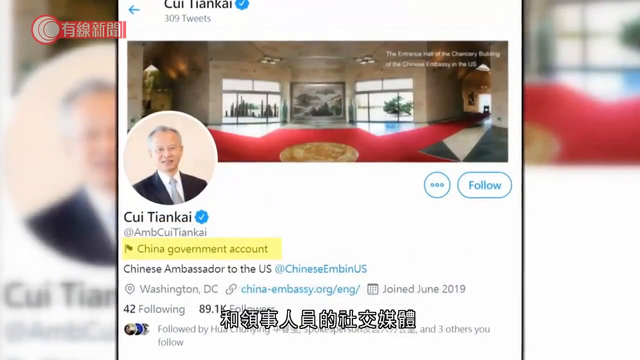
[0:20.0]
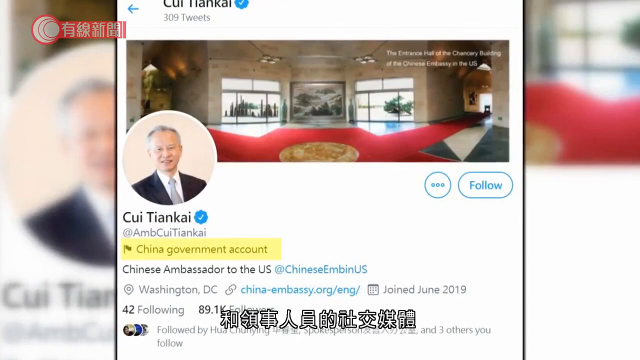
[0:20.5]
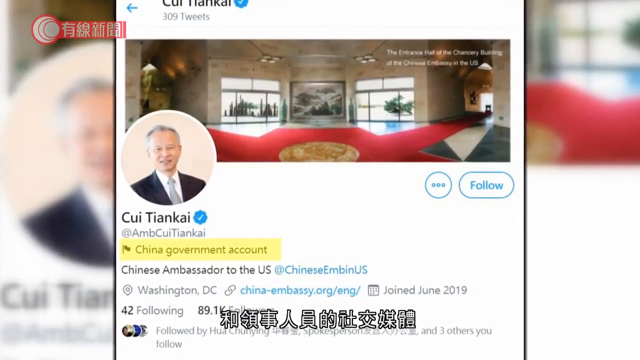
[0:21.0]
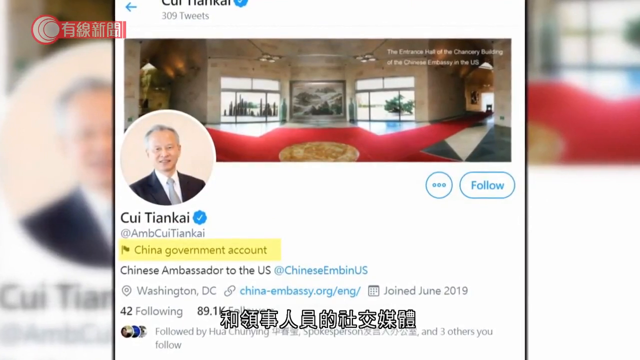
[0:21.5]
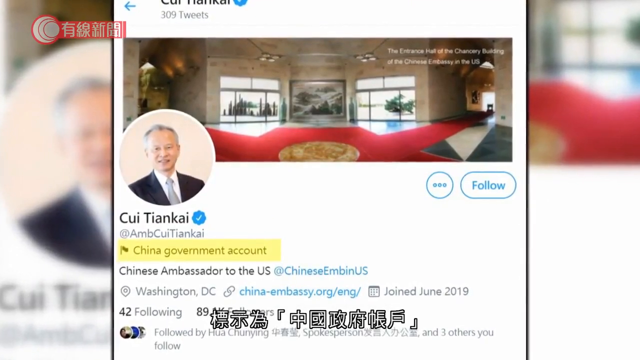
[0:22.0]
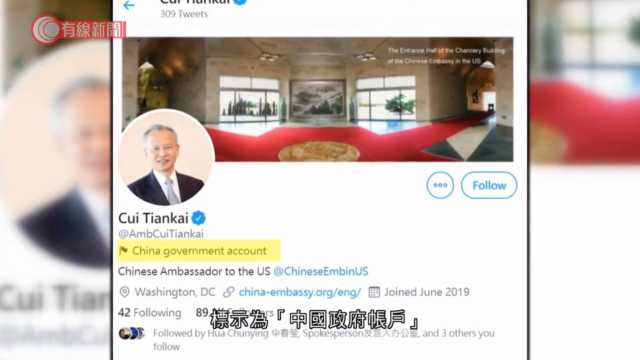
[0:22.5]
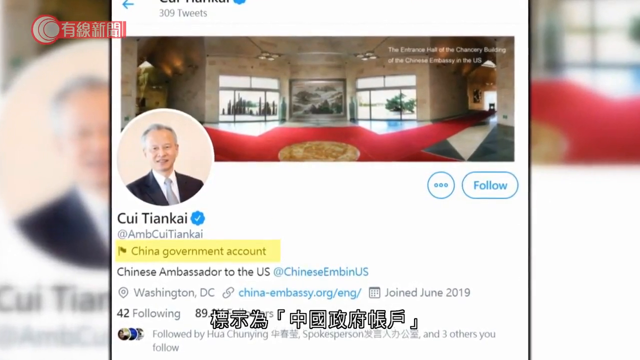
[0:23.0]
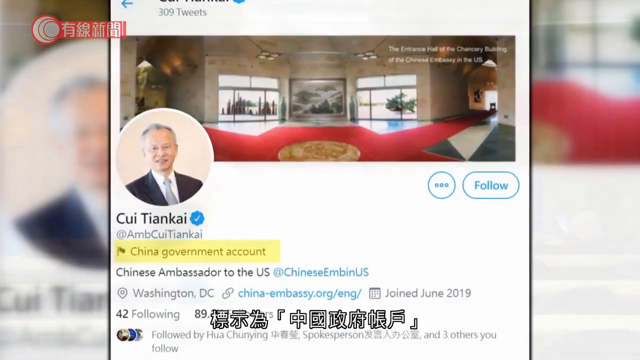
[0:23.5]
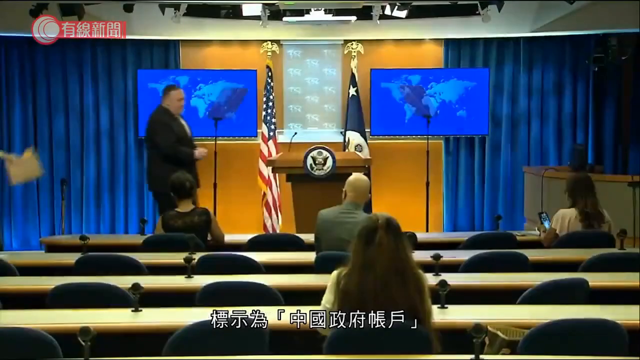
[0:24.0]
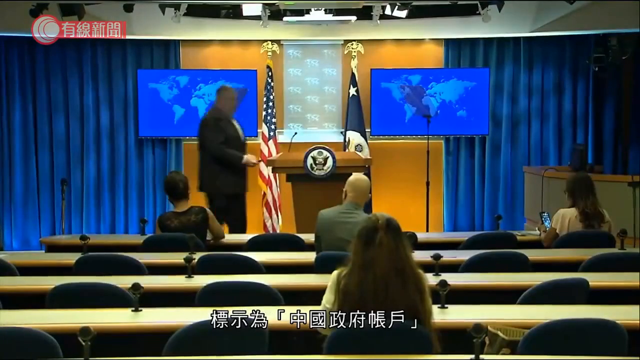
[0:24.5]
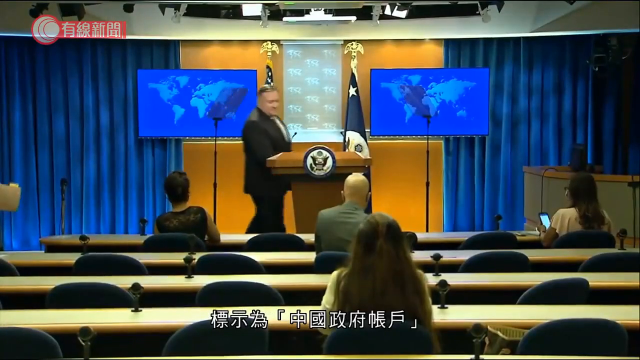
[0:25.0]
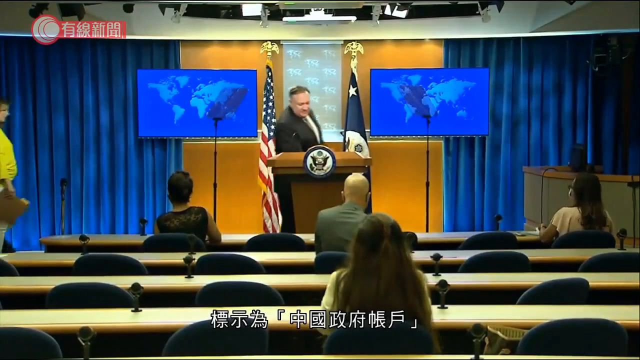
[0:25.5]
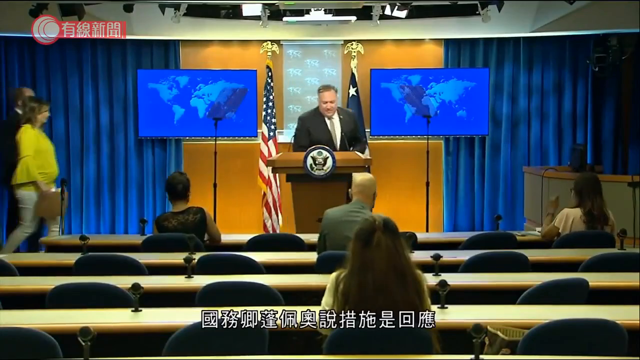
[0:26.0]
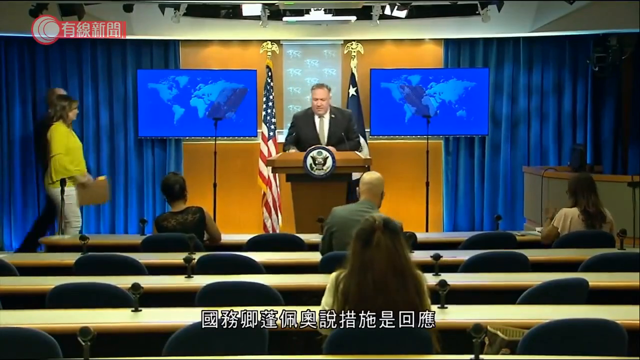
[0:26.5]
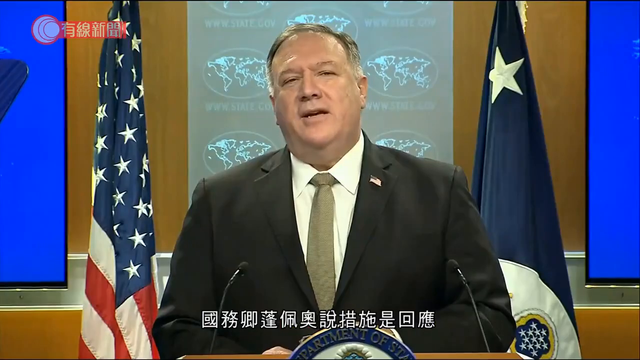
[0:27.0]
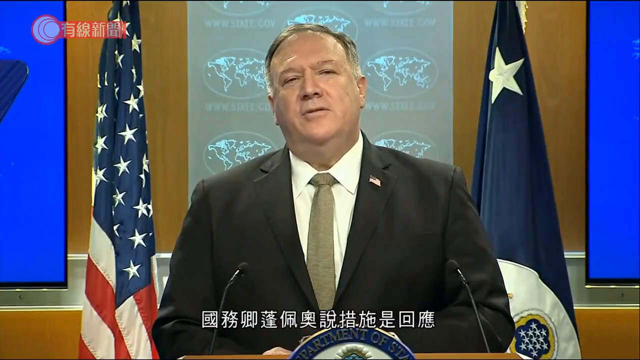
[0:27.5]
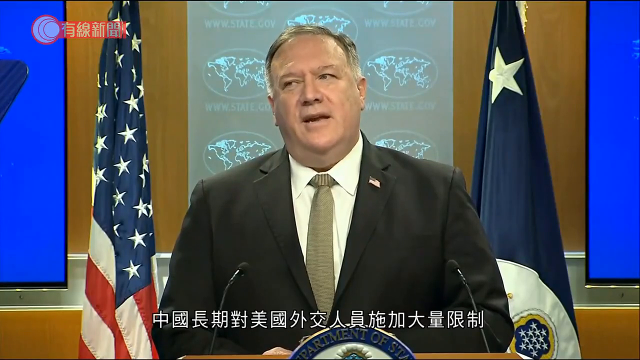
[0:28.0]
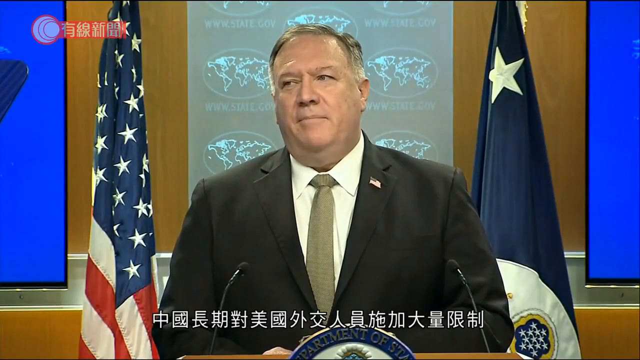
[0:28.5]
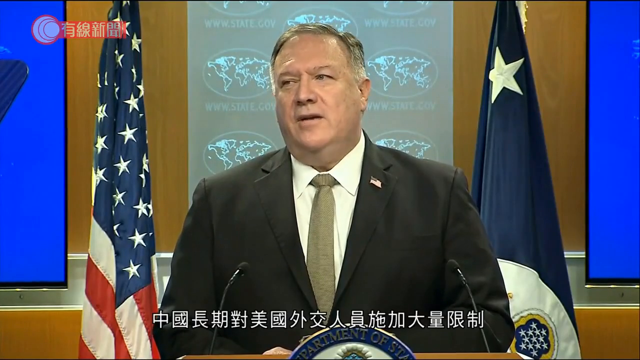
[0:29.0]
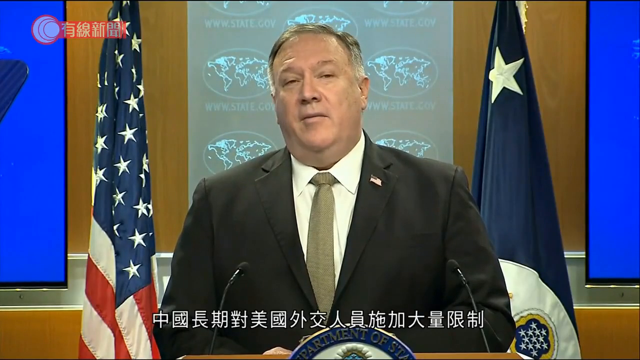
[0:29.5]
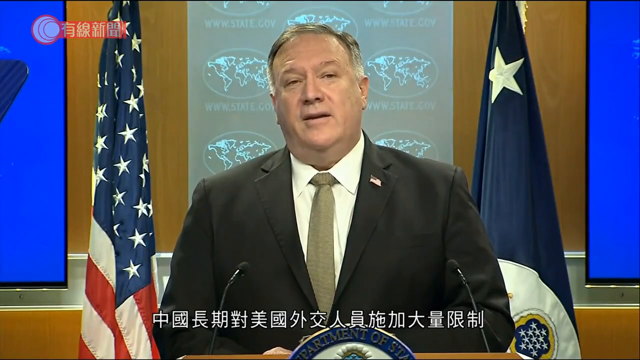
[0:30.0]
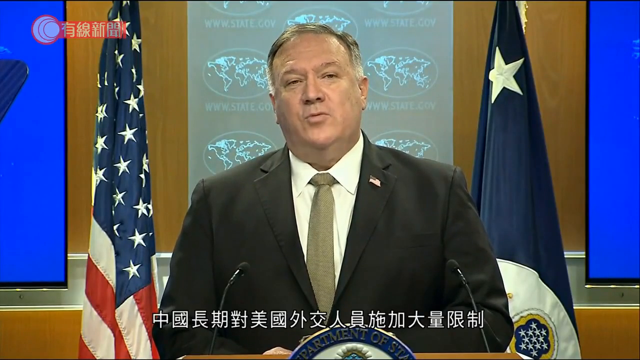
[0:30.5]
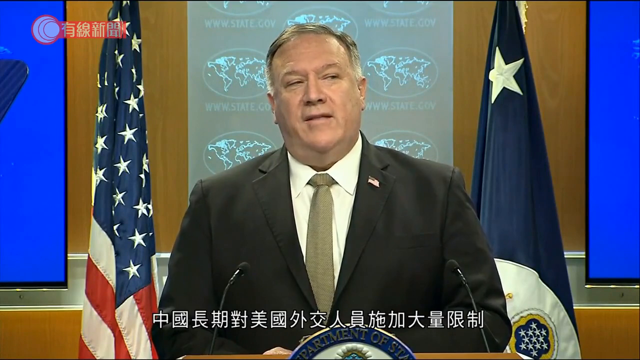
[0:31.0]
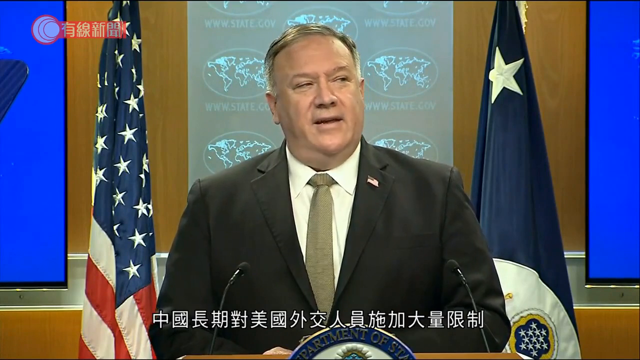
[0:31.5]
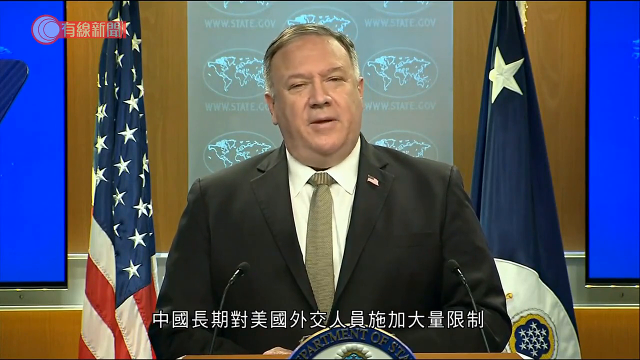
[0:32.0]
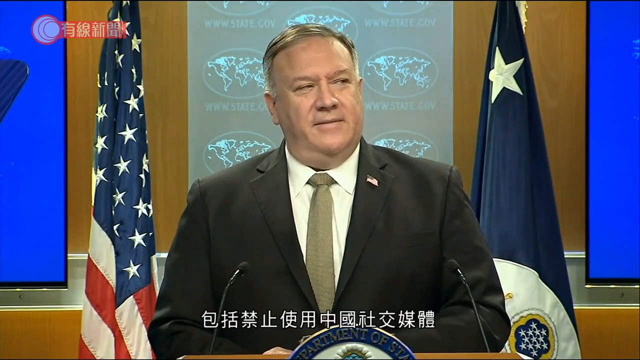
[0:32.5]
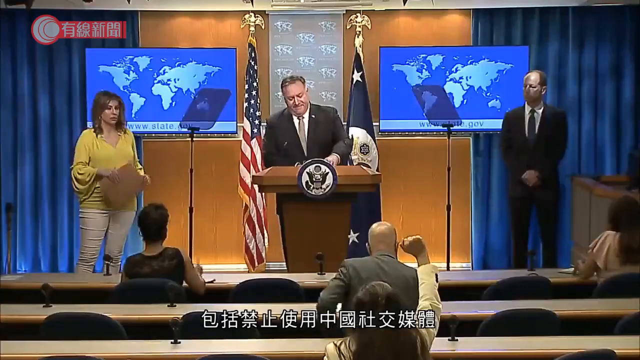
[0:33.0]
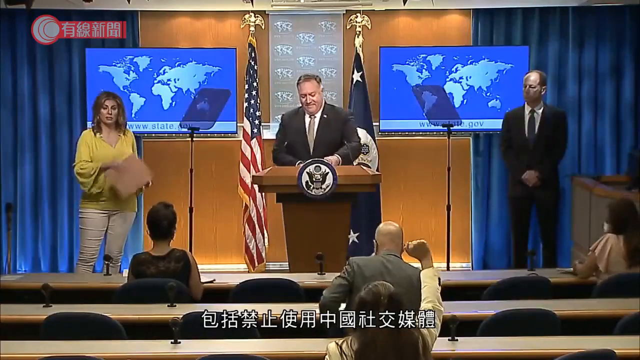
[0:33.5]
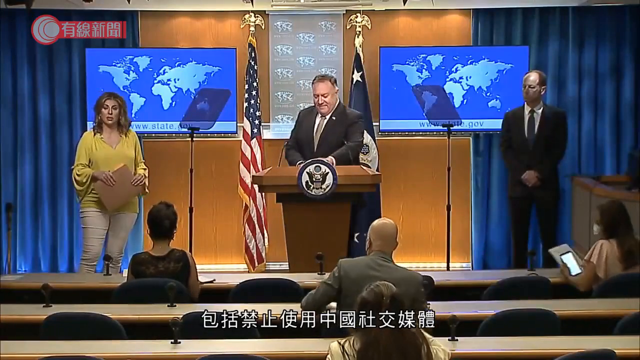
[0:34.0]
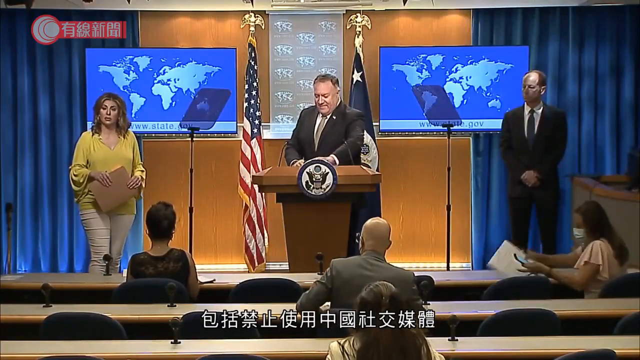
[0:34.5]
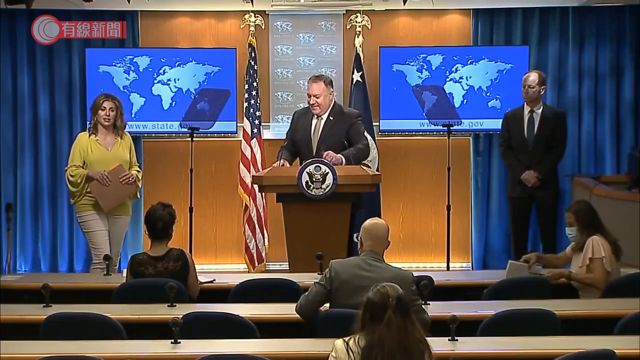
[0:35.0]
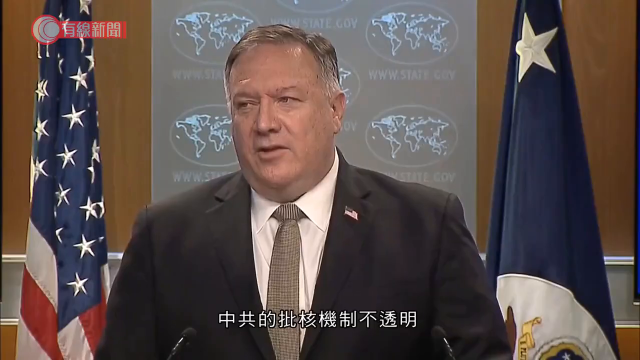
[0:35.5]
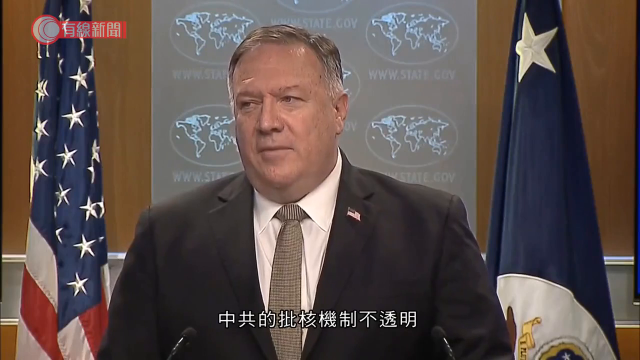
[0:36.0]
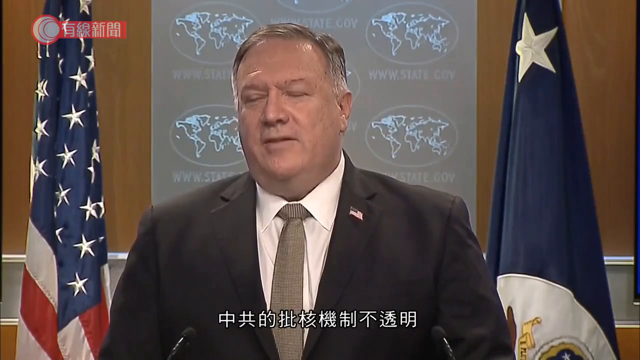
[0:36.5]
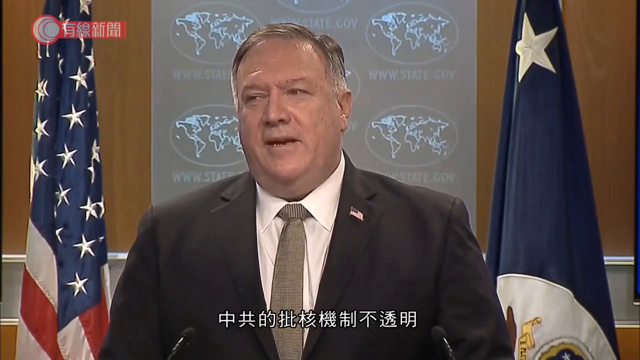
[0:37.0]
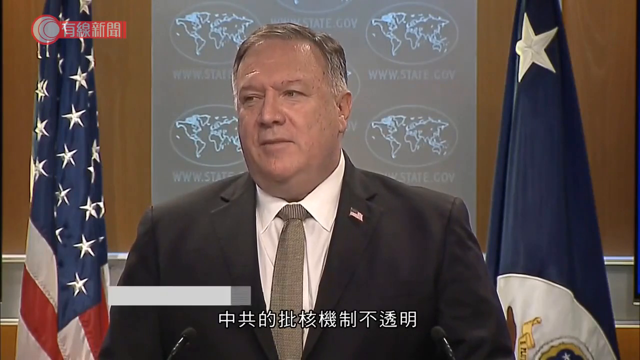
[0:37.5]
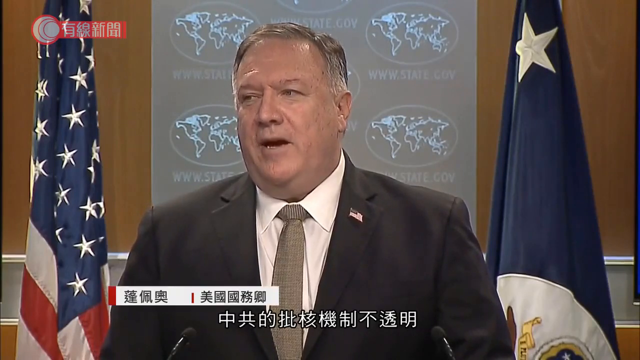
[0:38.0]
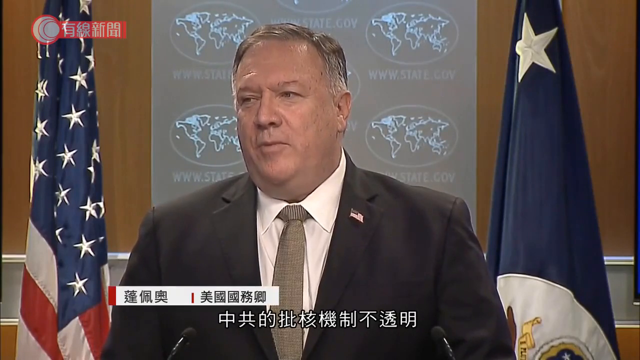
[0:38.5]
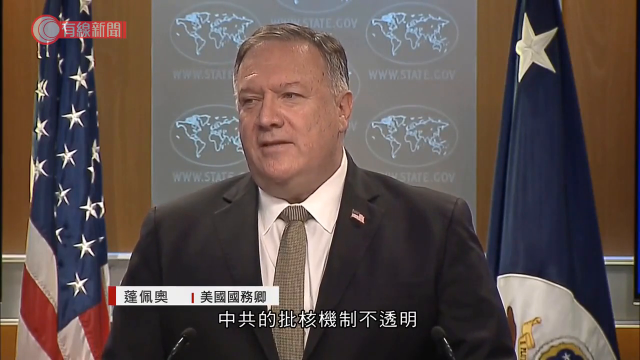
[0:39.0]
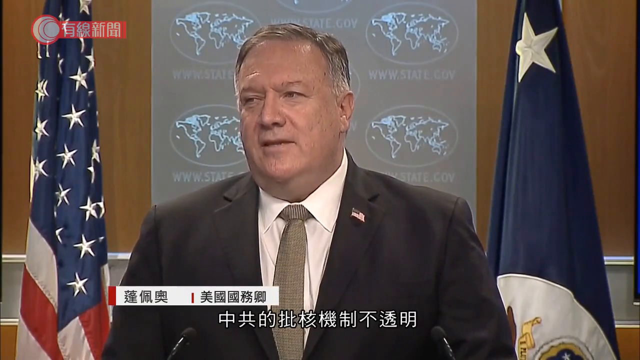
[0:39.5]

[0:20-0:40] A screenshot of a tweet from a Chinese ambassador to the U.S. appears, with Chinese subtitles continuing at the bottom of the screen. Then there appears to be a press conference where a white man with grayish hair, wearing a black suit, a gray tie and an American flag pin on his lapel, is speaking. There are flags and maps of the world behind him: two blue world maps, and directly behind him smaller maps in a kind of logo-type shape. Text reads "www.state.gov". It is possibly during COVID times: people look like they are staying six feet away from each other, the people on stage with him are six feet away, and some people in the audience have masks on.